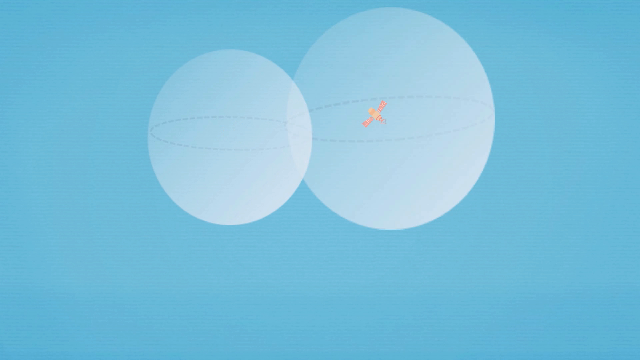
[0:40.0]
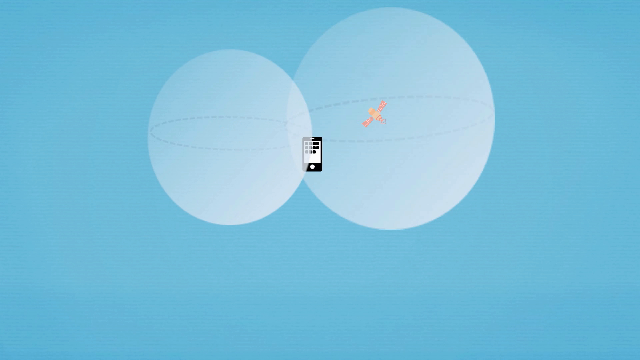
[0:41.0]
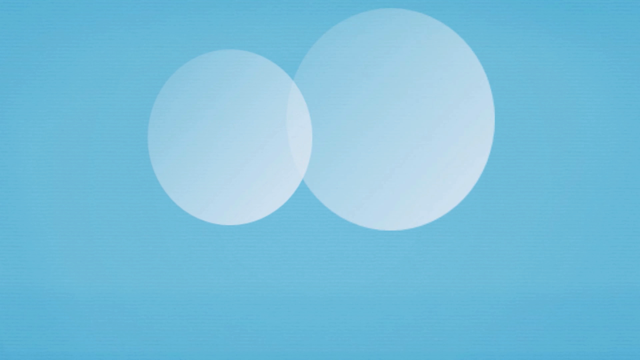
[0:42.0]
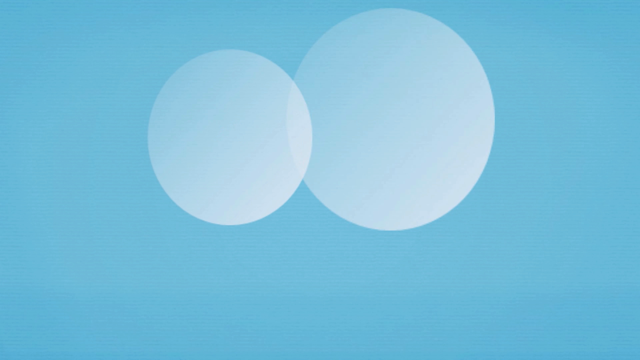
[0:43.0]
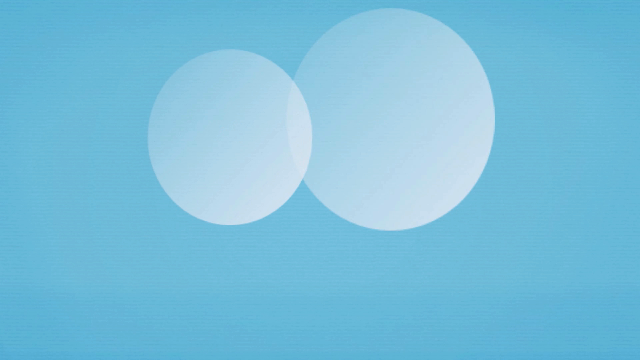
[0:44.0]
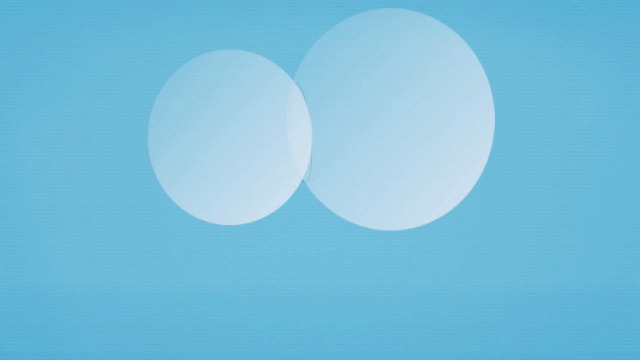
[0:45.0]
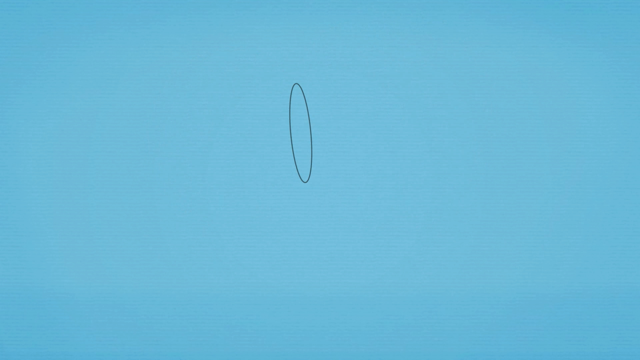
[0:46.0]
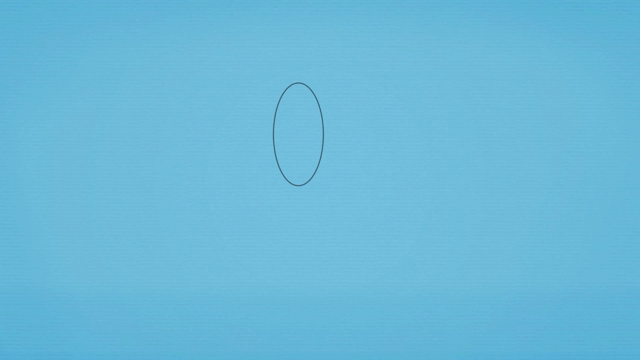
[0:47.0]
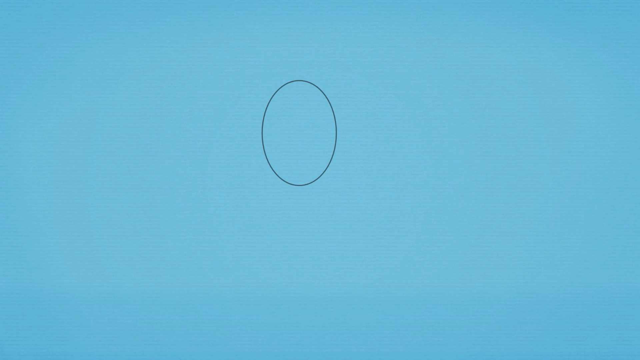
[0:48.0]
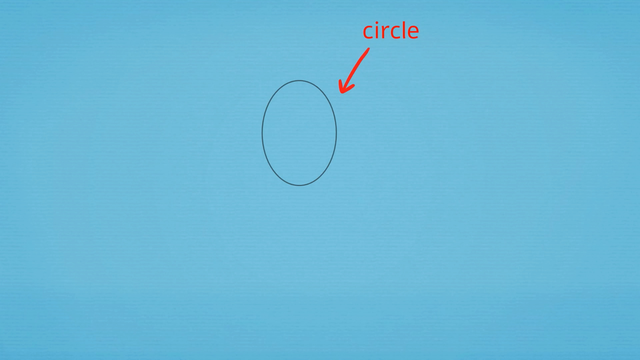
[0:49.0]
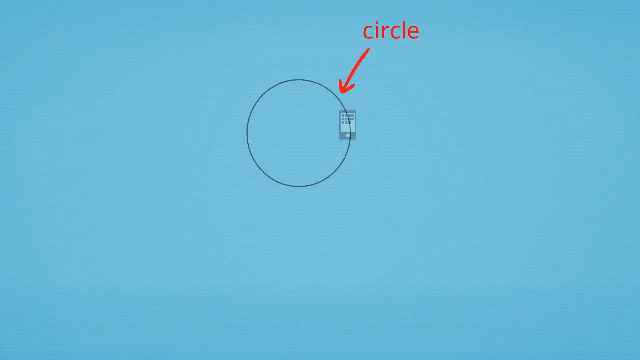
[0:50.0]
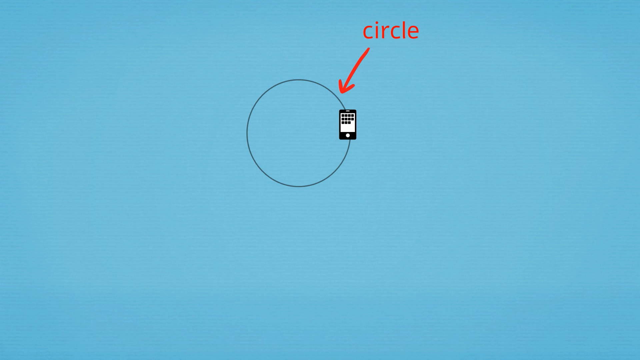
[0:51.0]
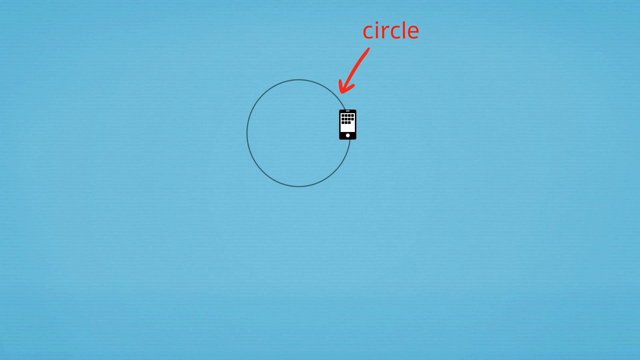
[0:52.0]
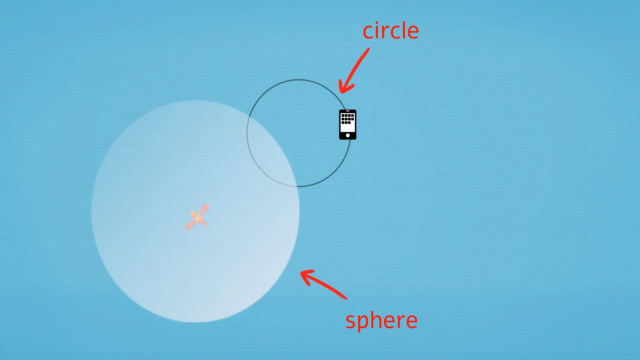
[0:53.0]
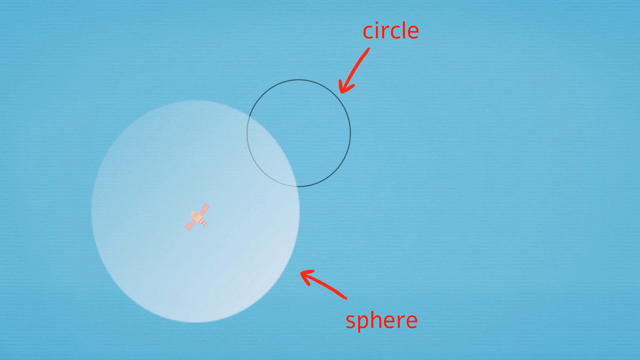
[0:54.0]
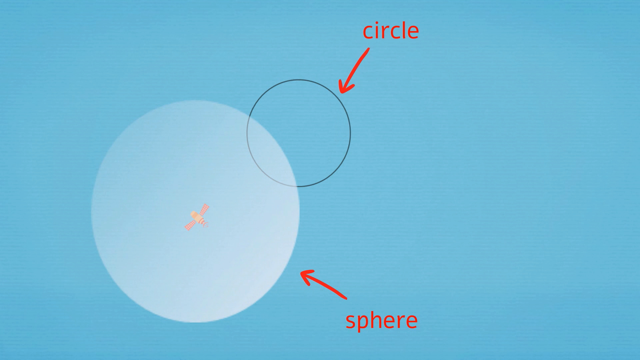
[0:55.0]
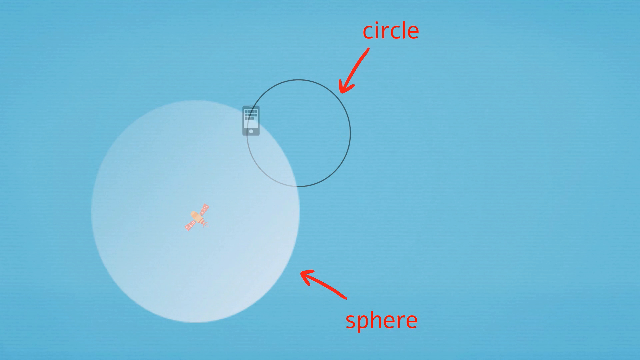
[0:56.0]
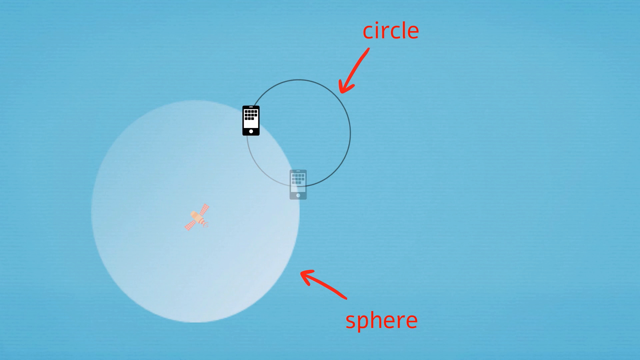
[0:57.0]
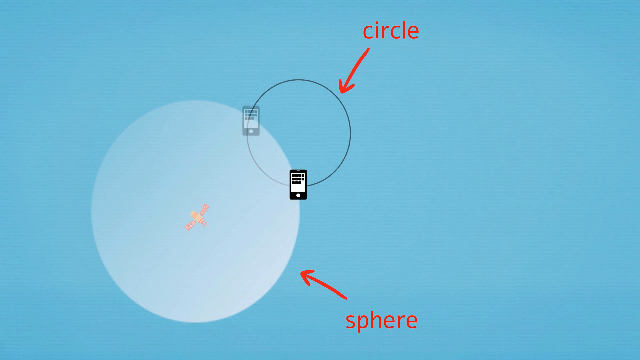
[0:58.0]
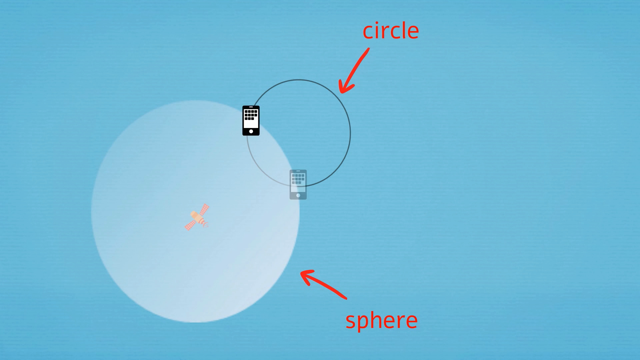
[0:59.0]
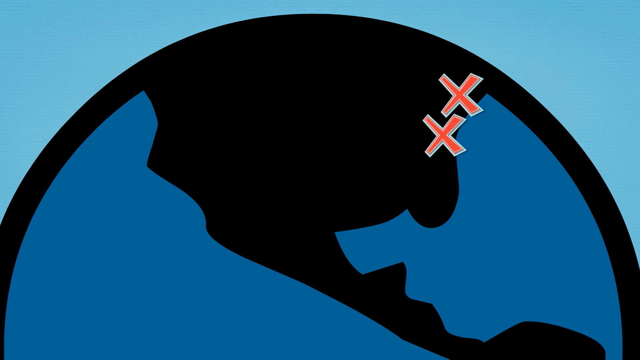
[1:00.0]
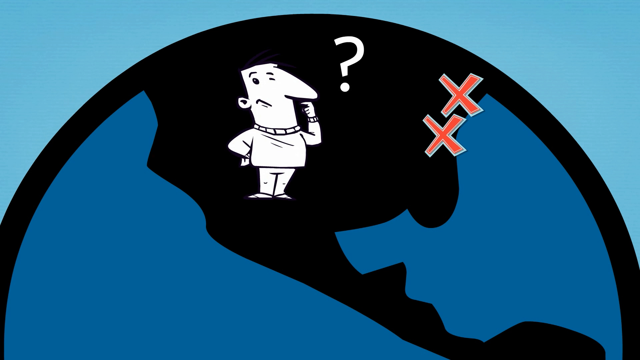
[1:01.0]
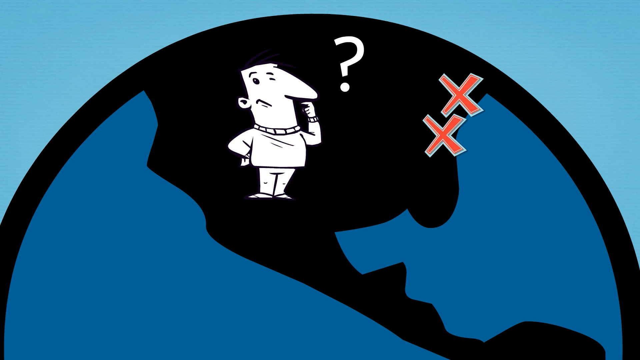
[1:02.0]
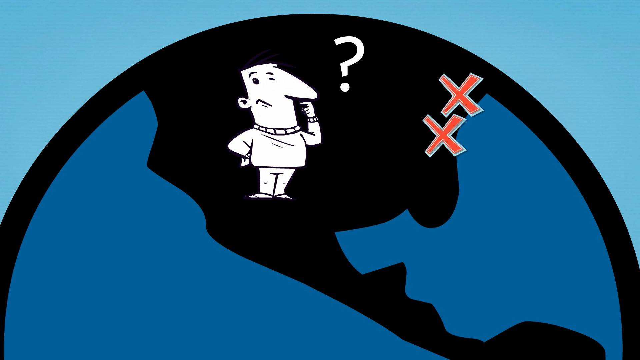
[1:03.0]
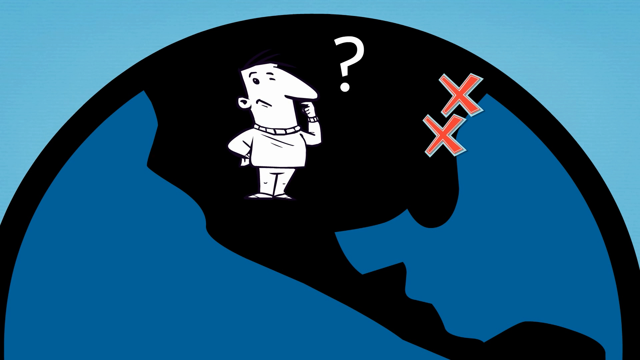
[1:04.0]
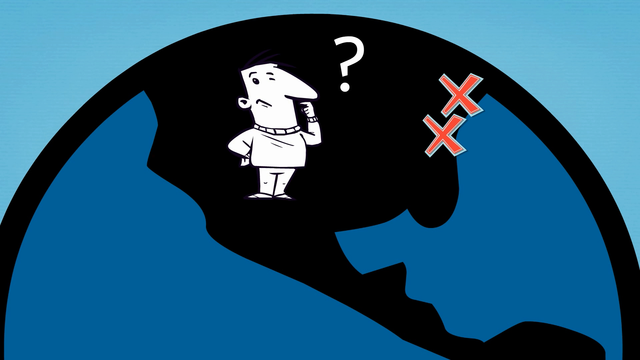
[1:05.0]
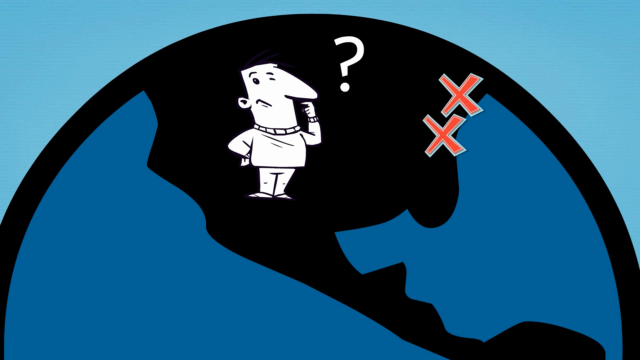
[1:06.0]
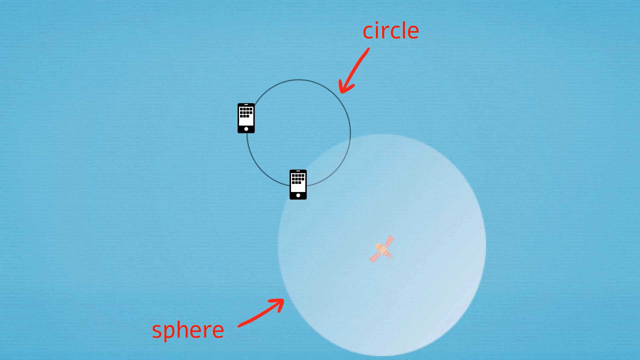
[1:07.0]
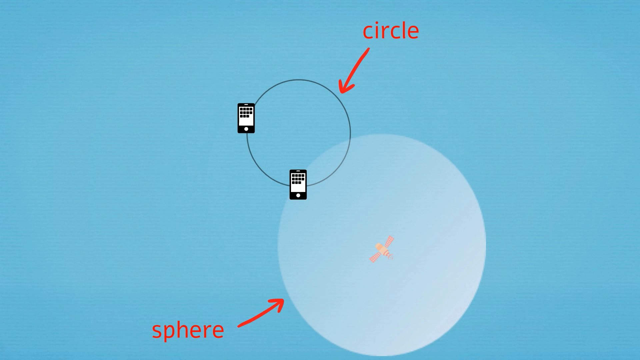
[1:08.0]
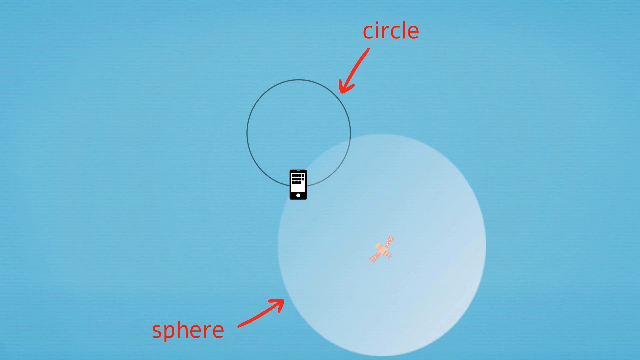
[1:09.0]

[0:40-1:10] Two spheres are on a light blue screen: a smaller sphere to the left of center and a larger sphere touching it on its right. The next screen animates a circle, with text that says "circle" and an arrow pointing to a circle made out of a line. This little circle is touching the much larger white sphere, which has the satellite in its middle. Other text in red points to the sphere, showing the difference between the circle and the sphere. The animation brings the iPhone into the line circle at both the bottom and the left, and the iPhone appears and disappears. The next screen animates a man standing on a planet. The black planet, with pieces of blue land, covers most of the page on a light blue background. The man scratches his nose, with a question mark next to him and two red X's in front of him, and he taps his foot as if wondering what is going on.